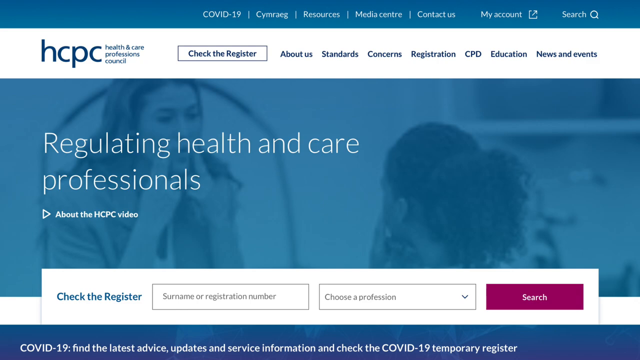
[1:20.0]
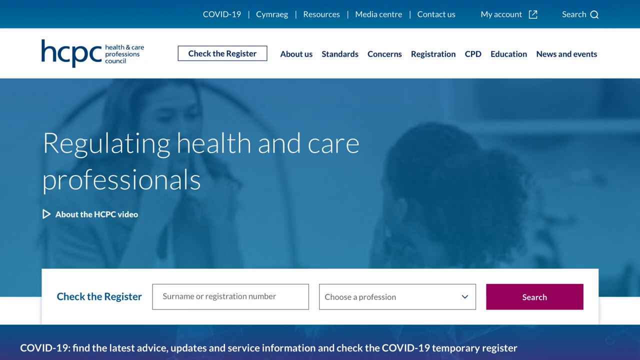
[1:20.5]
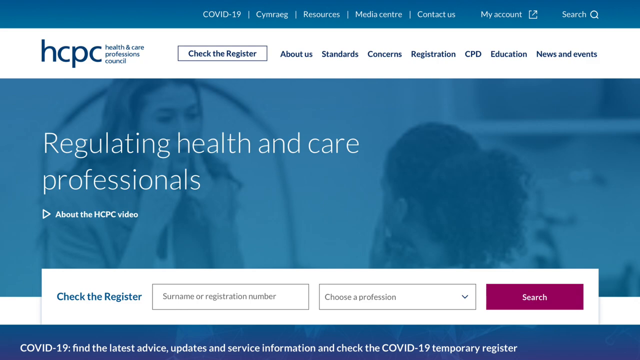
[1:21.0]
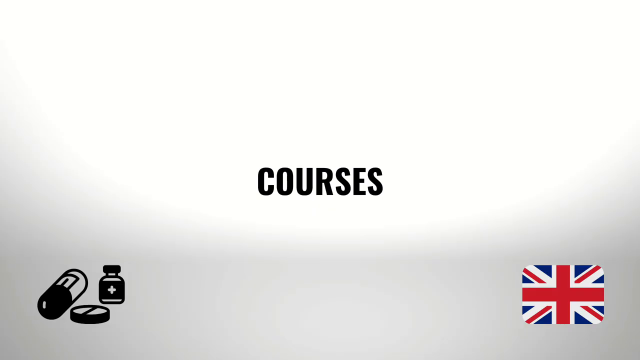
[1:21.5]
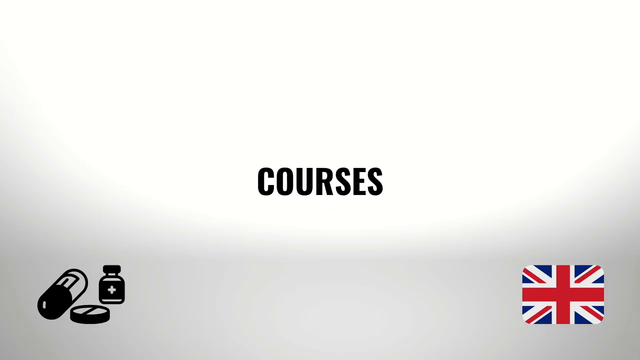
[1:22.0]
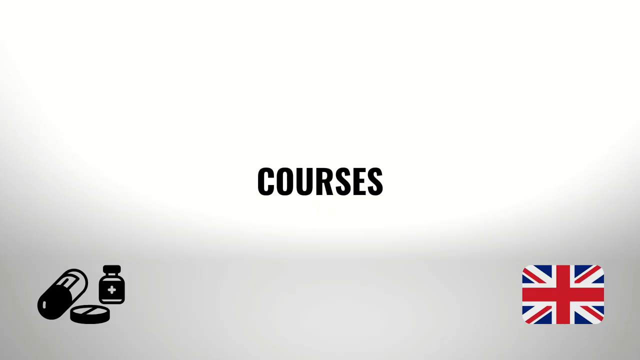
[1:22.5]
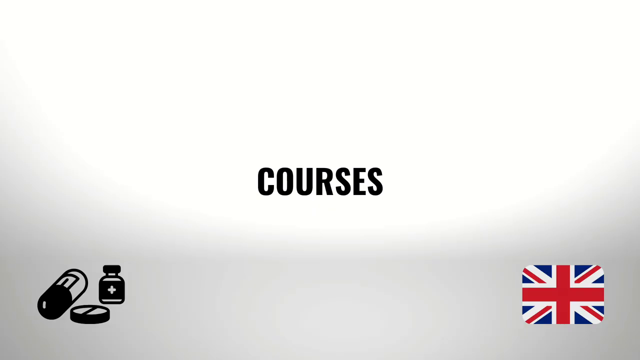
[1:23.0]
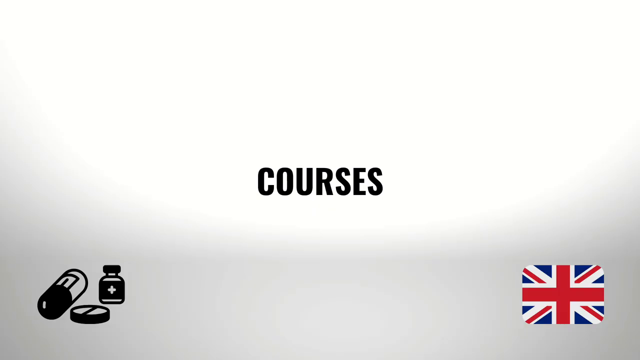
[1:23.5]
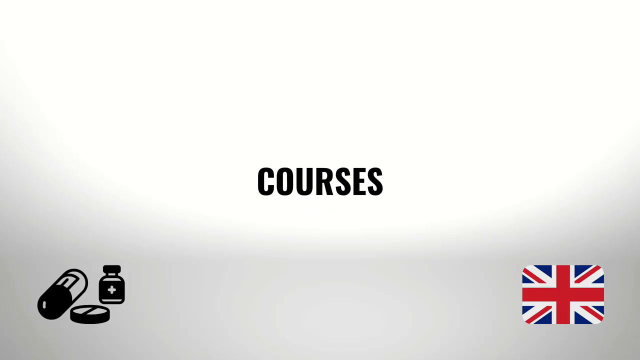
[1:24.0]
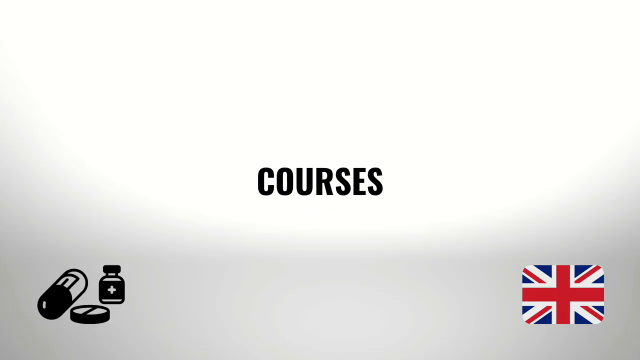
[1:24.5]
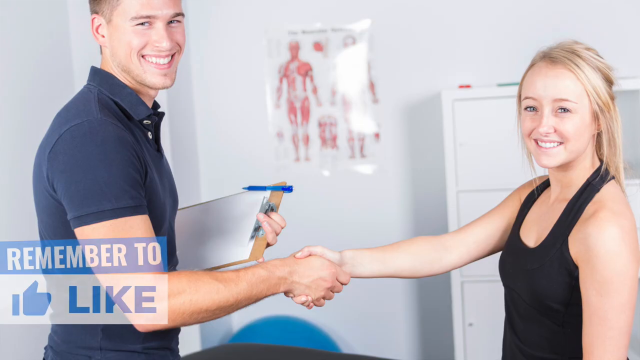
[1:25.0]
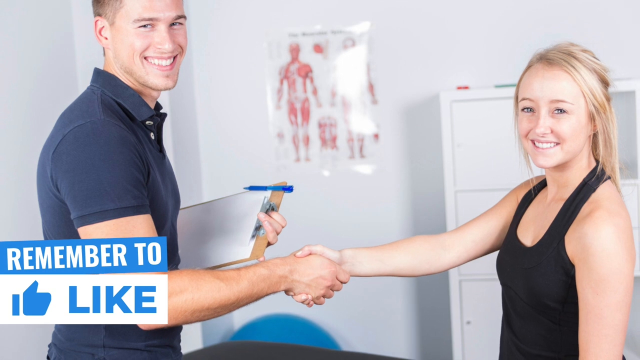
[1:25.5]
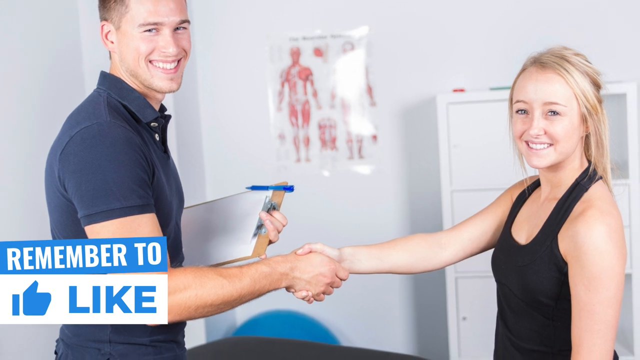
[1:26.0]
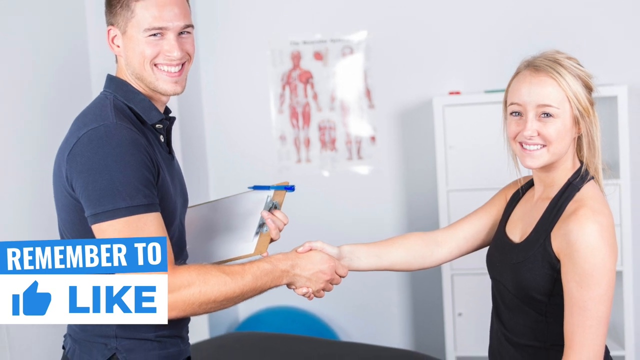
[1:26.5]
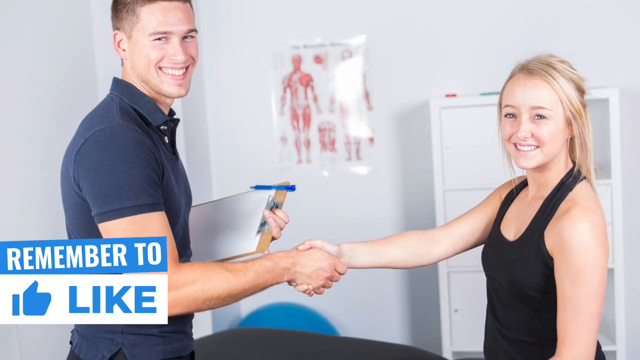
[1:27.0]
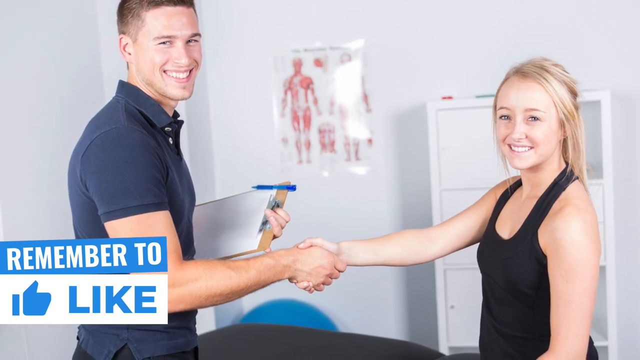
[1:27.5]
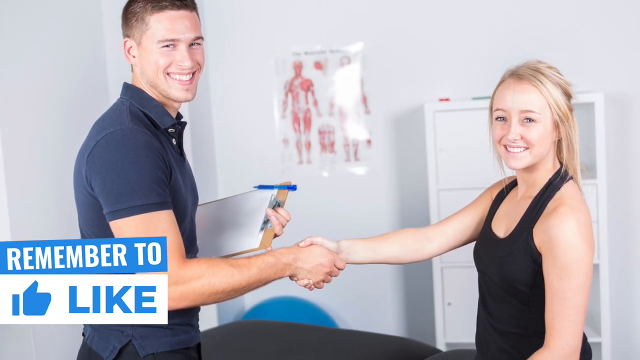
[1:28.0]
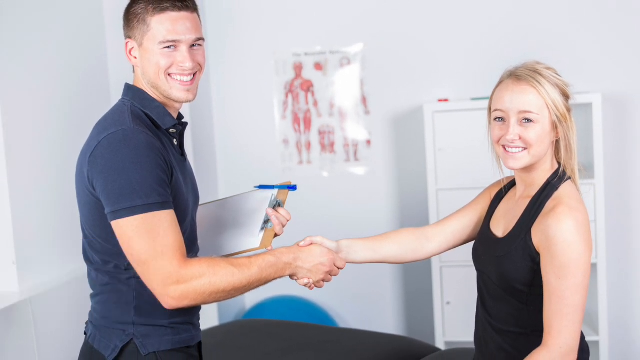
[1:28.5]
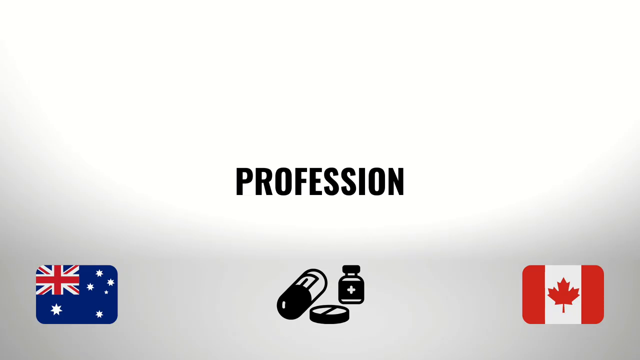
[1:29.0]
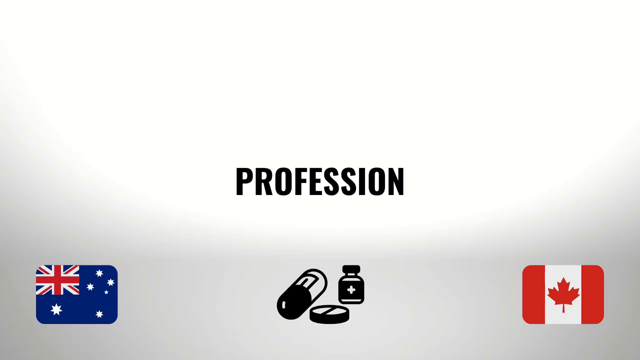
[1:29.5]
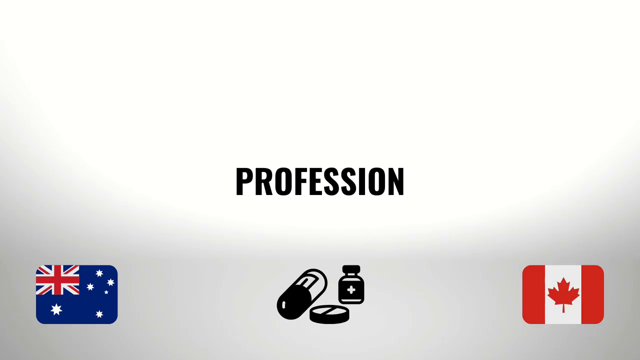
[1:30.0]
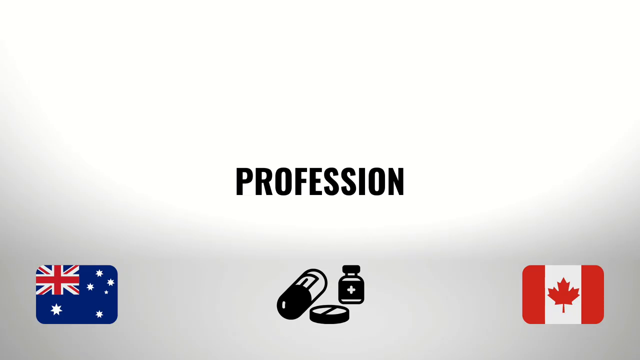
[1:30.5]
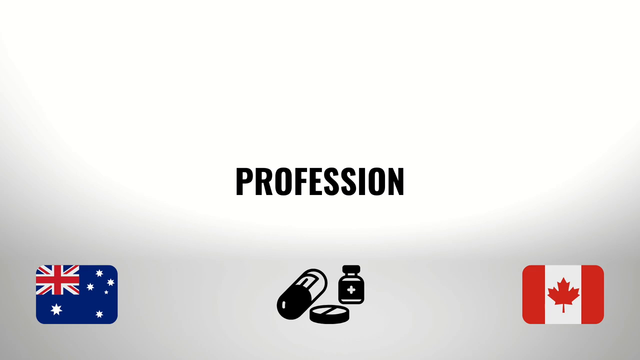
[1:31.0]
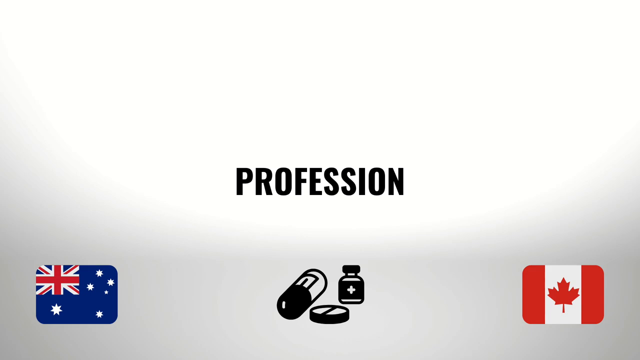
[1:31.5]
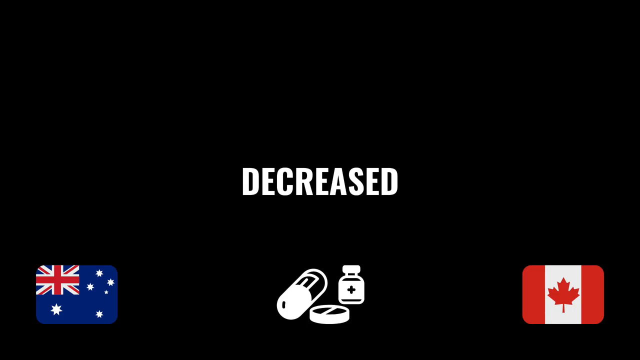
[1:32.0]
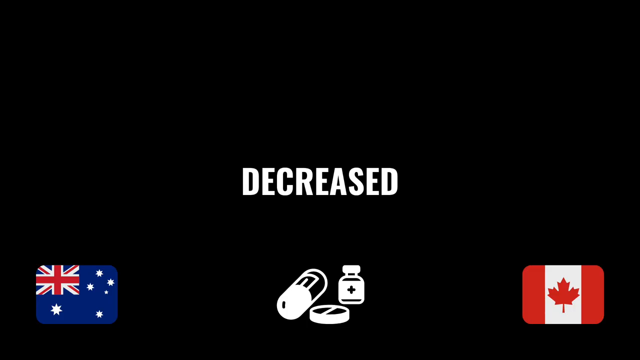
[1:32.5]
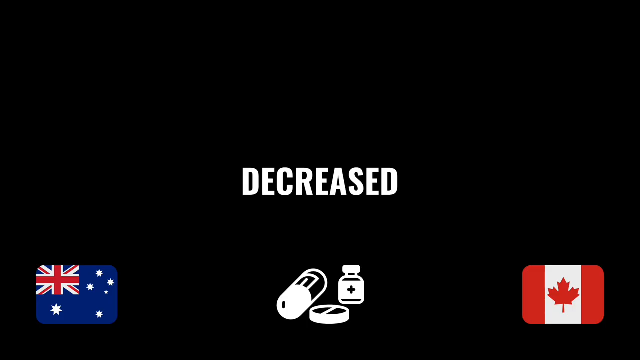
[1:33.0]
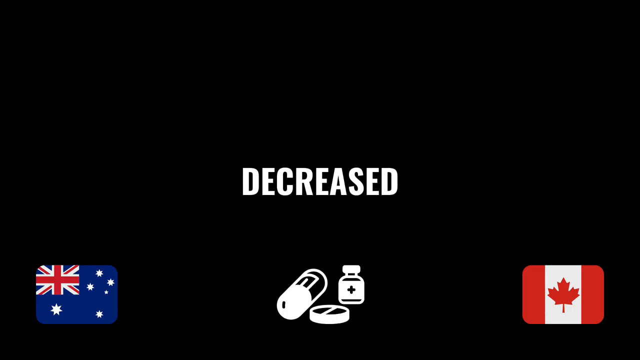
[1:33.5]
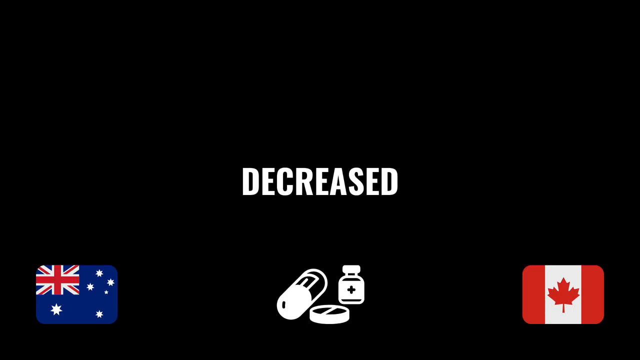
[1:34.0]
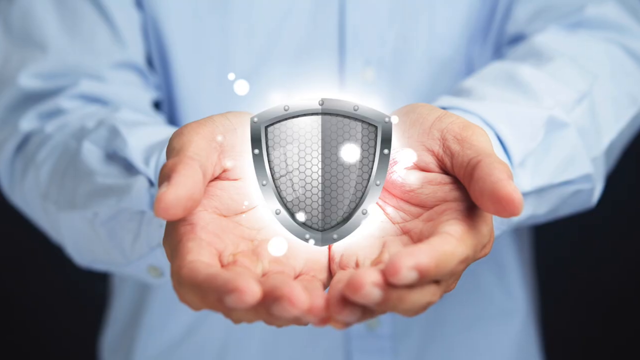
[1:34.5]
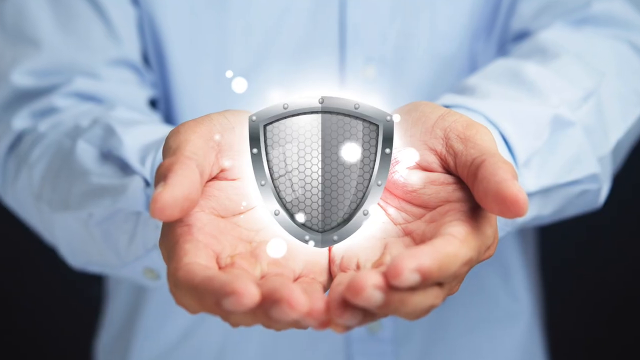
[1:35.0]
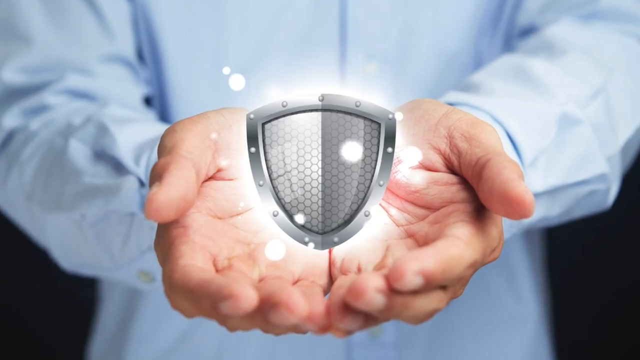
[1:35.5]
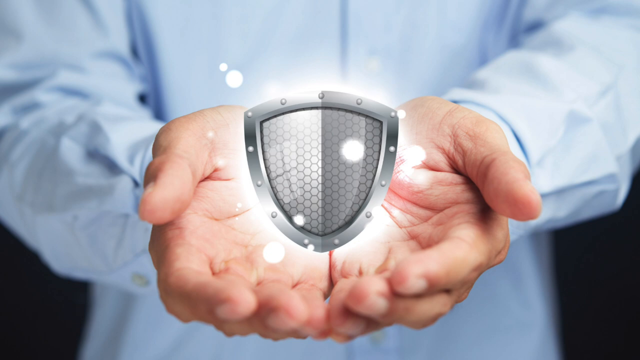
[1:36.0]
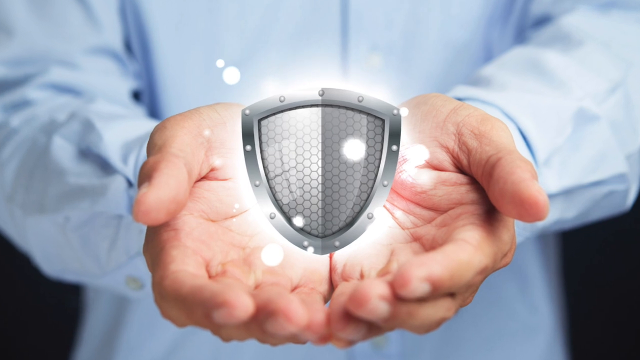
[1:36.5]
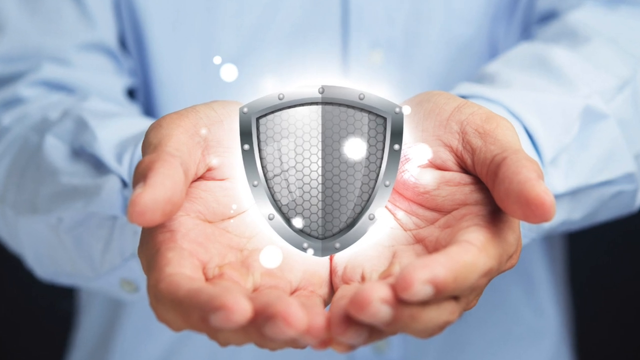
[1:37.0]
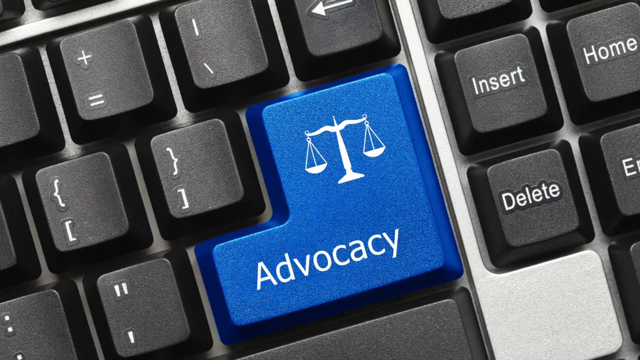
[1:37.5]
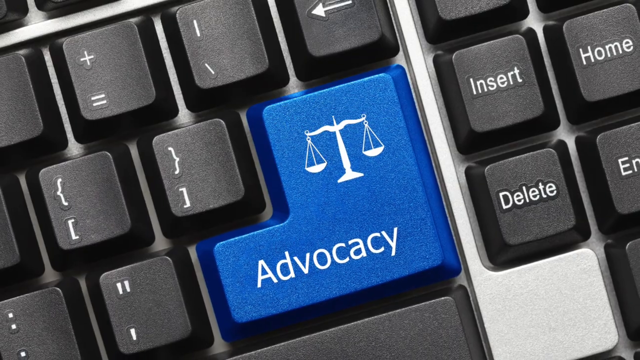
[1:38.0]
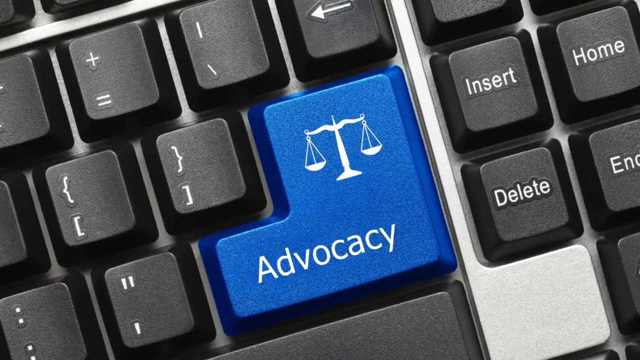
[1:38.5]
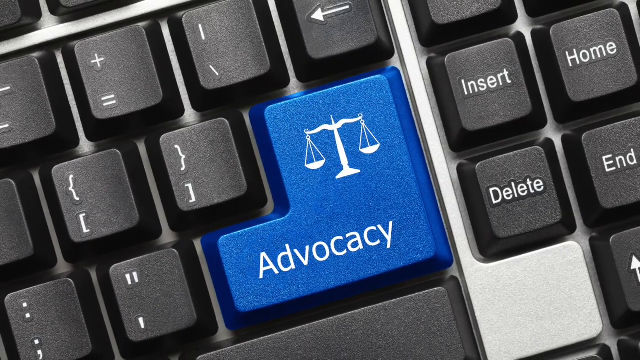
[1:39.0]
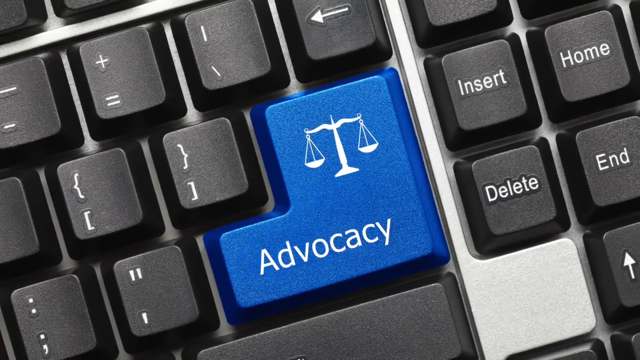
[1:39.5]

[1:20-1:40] The website has a blue strip at the top with words, apparently clickable: "COVID-19," "SimReg," "Resources," "Media Center," "Contact Us," "My Account," "Search." A white strip below says "the HCPC, Healthcare Professions Council," "Check the Register," "About Us," "Standards," "Concerns," "Registration," "CPD," "Education," "News and Events." A blue background reads "Regulating Healthcare Professionals" and "about the HCPC video," with a white search box. Text then says "Courses," and a "Remember to Like" pop-up appears on screen. Two younger people are shown: a man on the left smiling broadly at the camera, shaking hands with a younger lady who wears a black tank top, has straight long blonde hair and blue eyes, and is also smiling at the camera. The man holds a clipboard in his left hand with a pin attached to it. Text then says "Profession" and "Decreased." An animated picture shows a man with his hands held in a bucket form and a shield in his hands. The video then cuts to the word "advocacy."